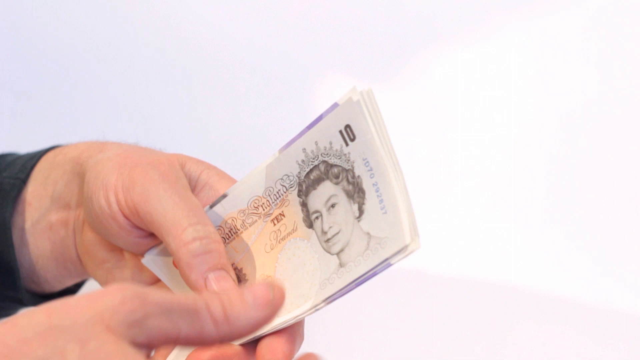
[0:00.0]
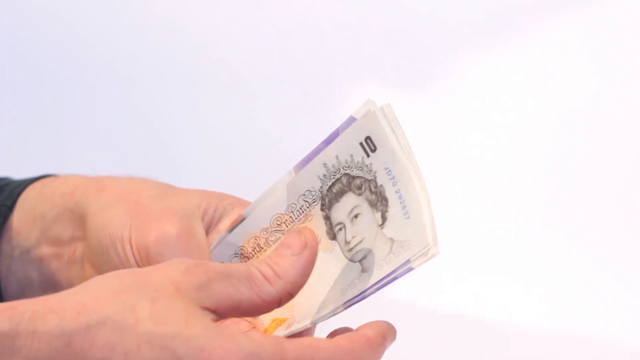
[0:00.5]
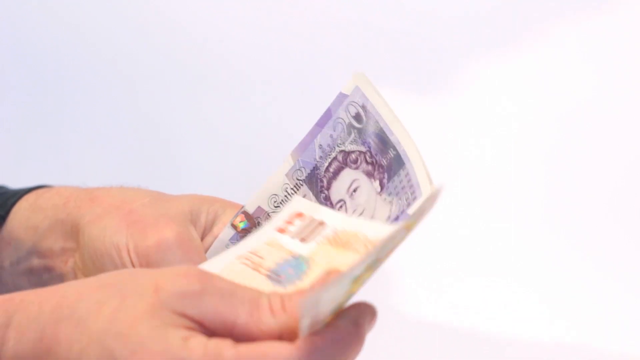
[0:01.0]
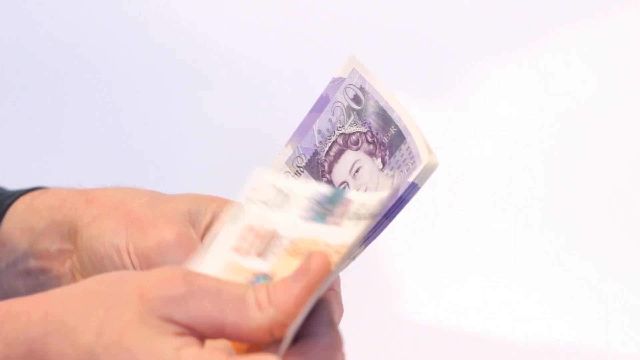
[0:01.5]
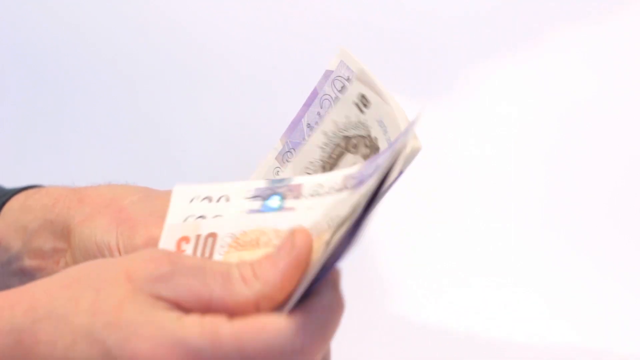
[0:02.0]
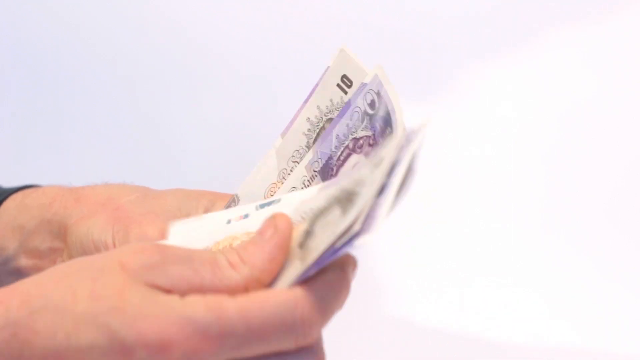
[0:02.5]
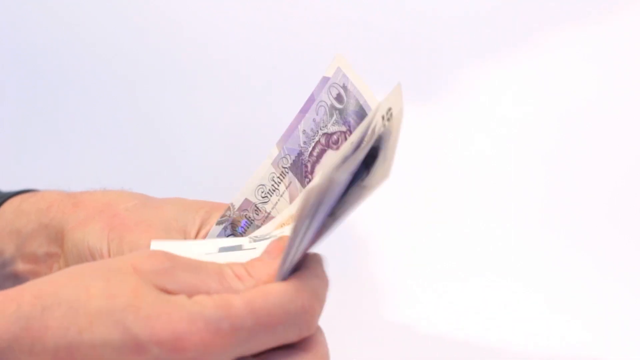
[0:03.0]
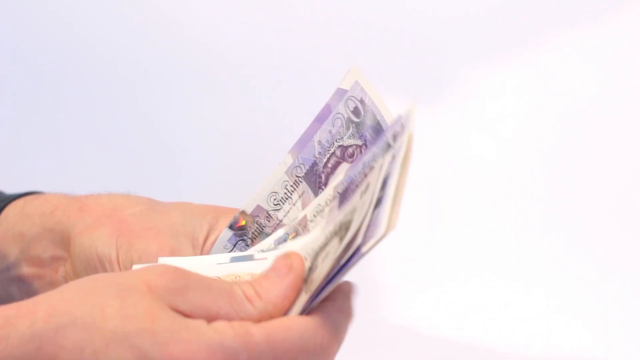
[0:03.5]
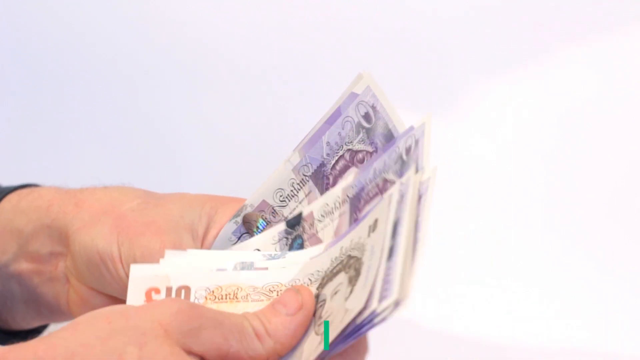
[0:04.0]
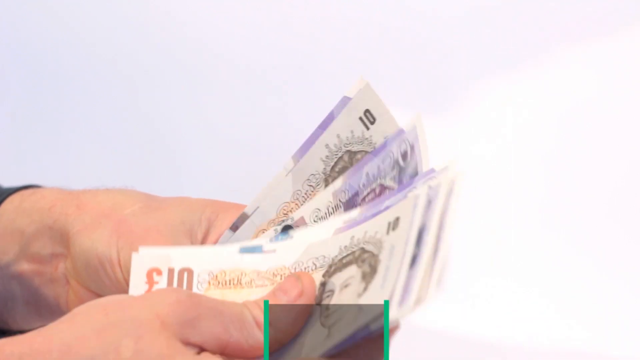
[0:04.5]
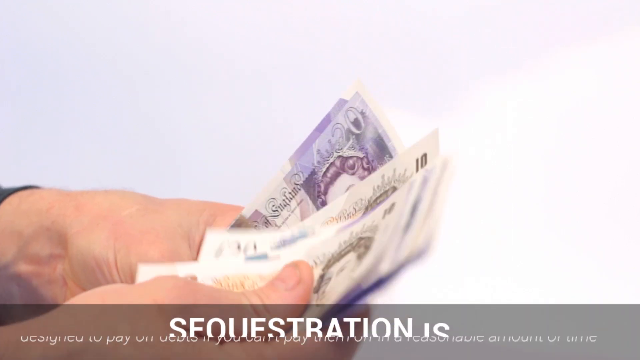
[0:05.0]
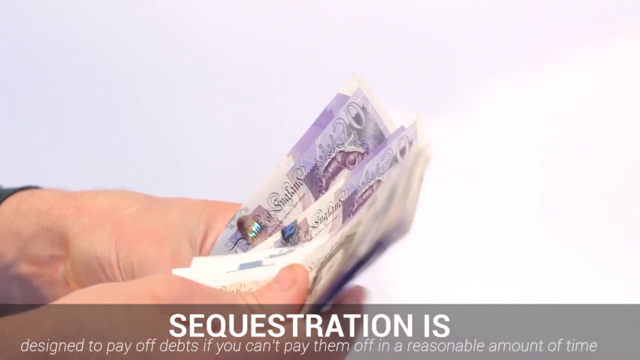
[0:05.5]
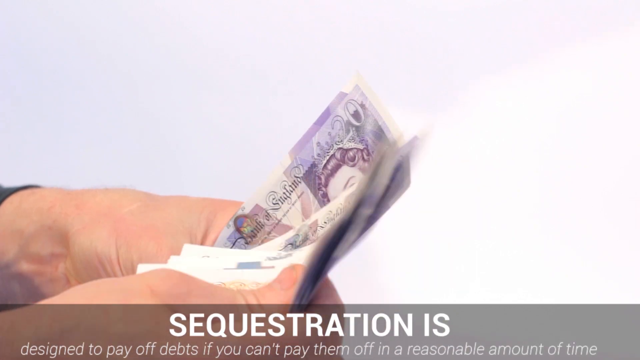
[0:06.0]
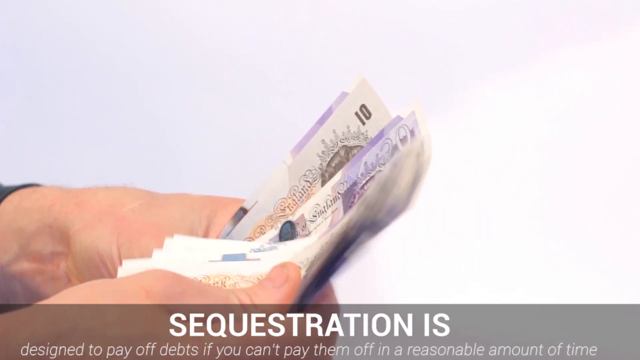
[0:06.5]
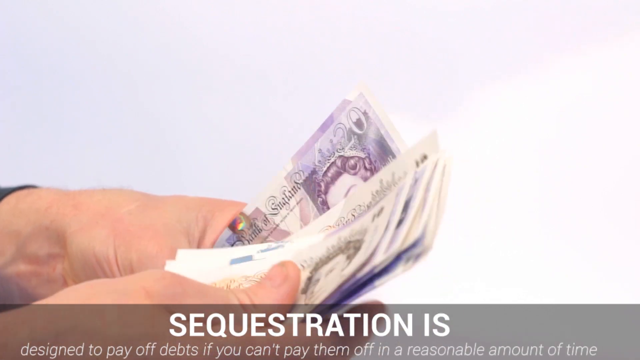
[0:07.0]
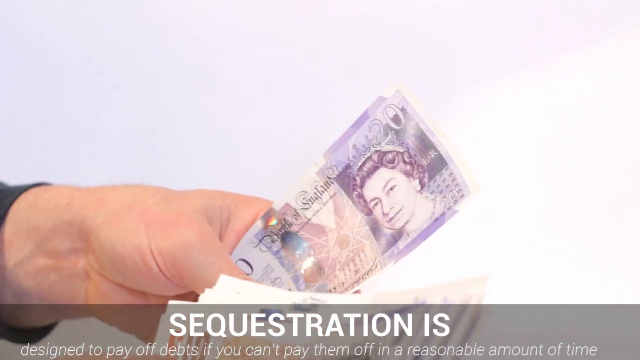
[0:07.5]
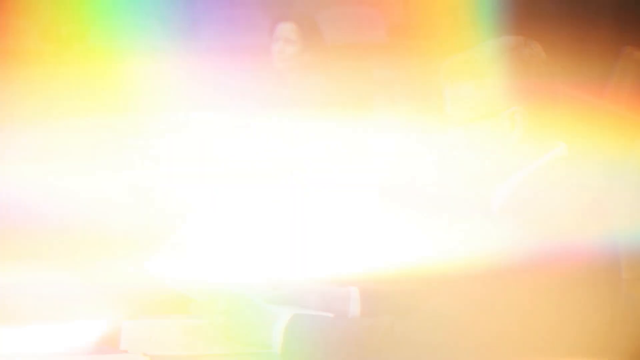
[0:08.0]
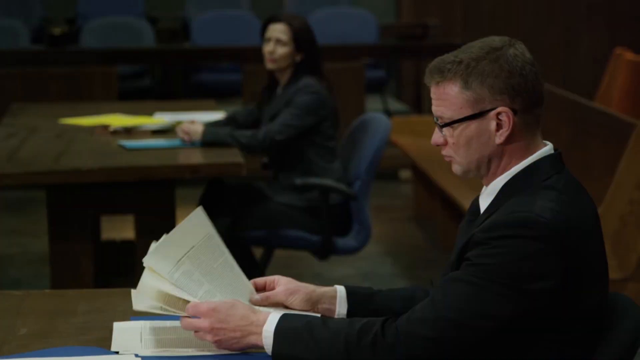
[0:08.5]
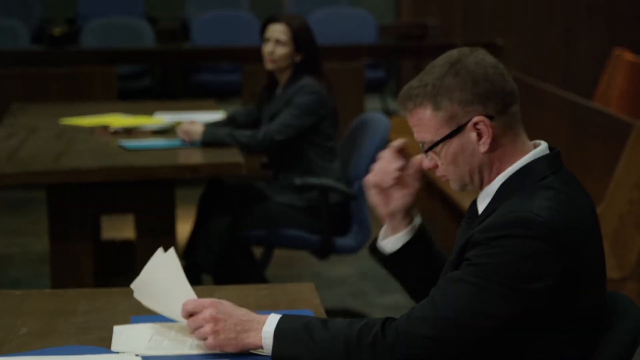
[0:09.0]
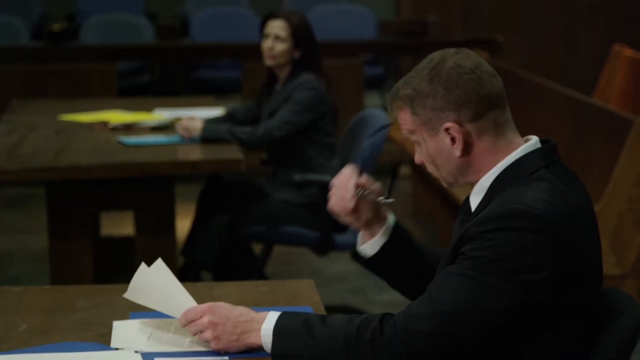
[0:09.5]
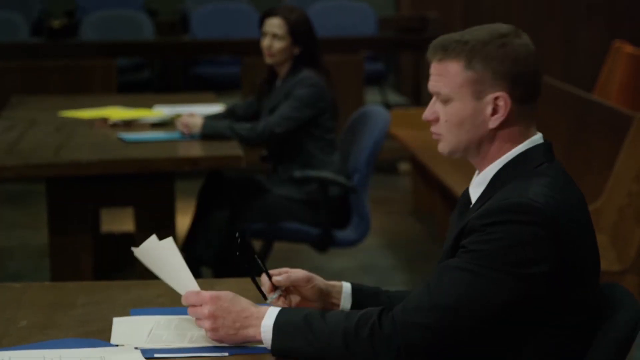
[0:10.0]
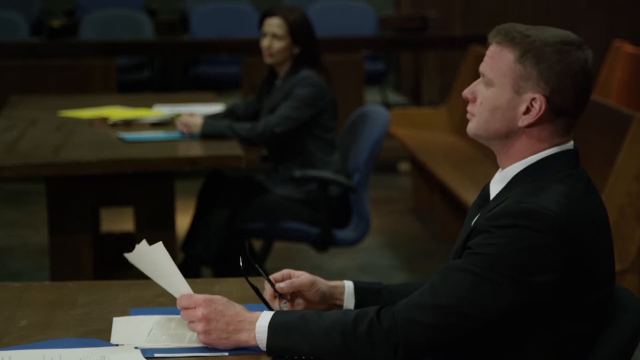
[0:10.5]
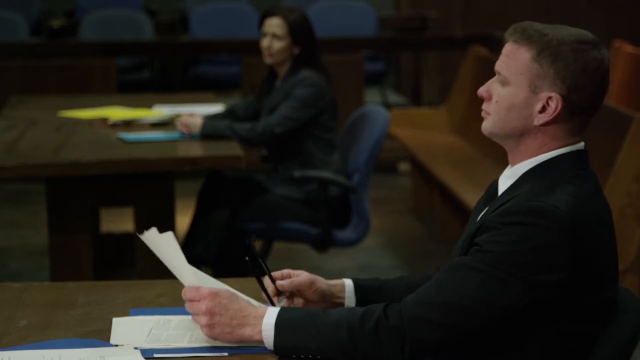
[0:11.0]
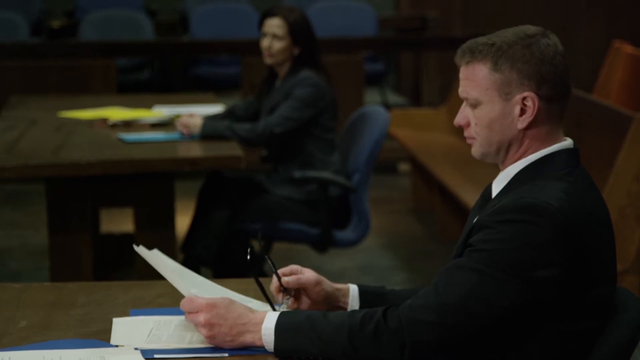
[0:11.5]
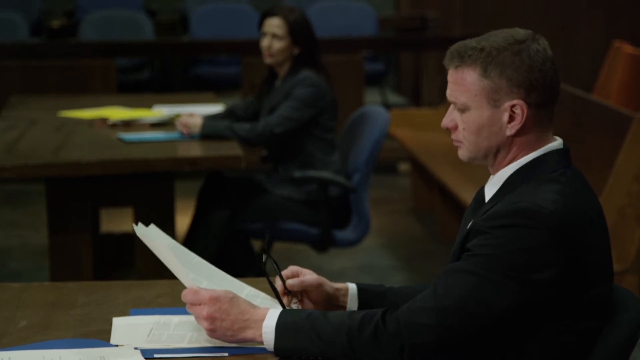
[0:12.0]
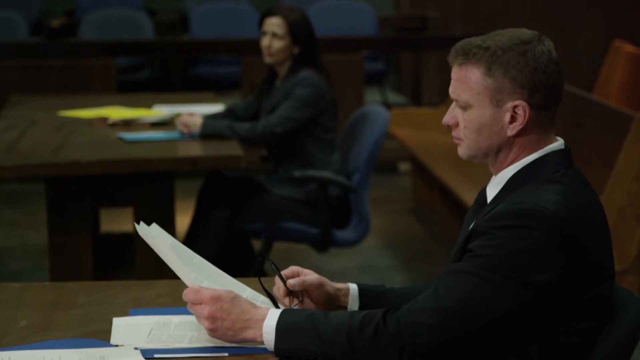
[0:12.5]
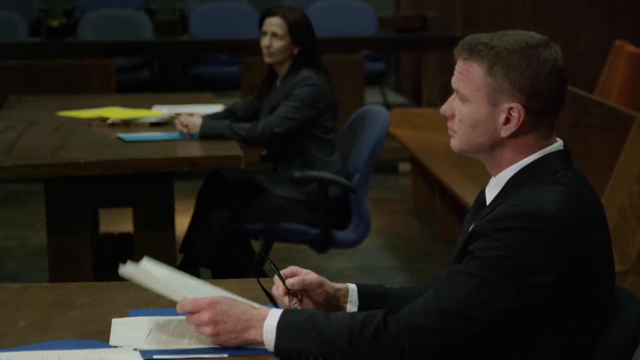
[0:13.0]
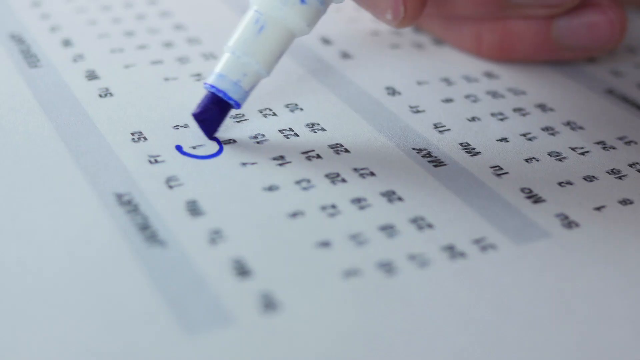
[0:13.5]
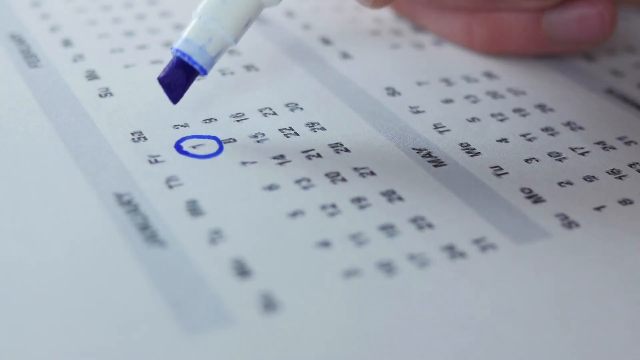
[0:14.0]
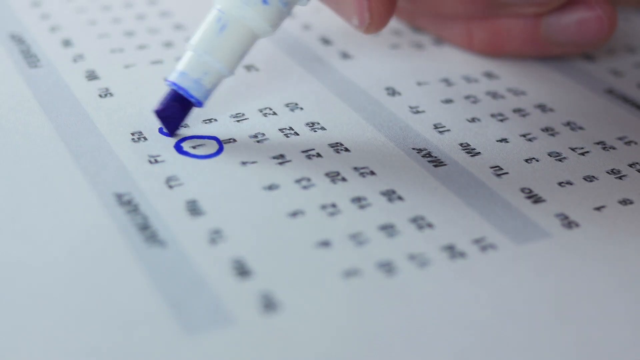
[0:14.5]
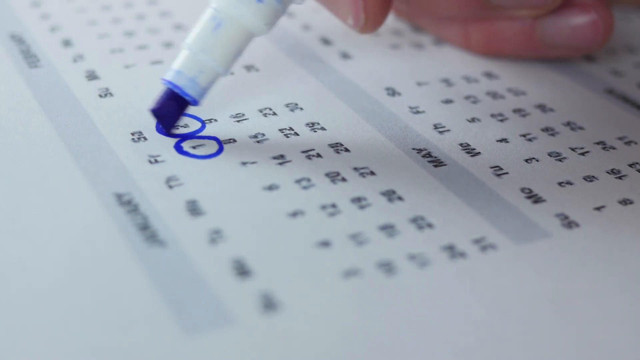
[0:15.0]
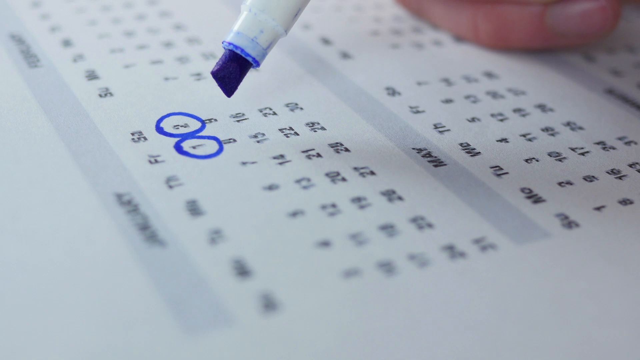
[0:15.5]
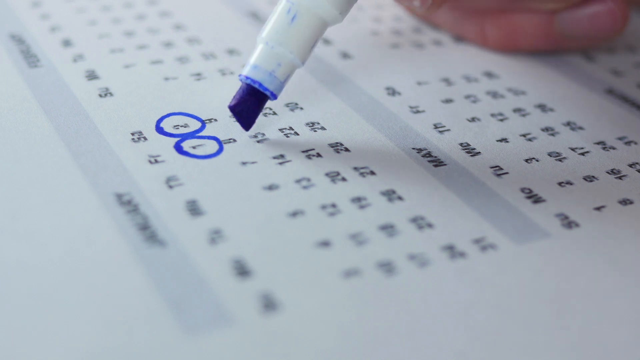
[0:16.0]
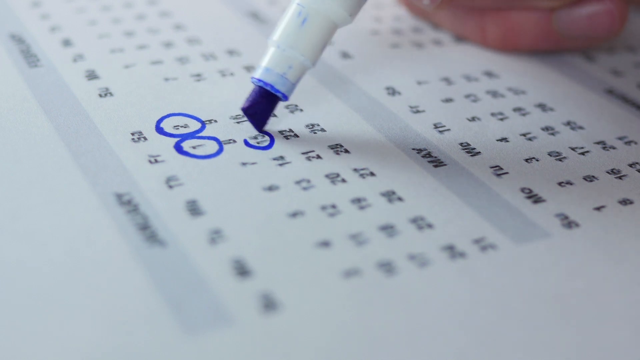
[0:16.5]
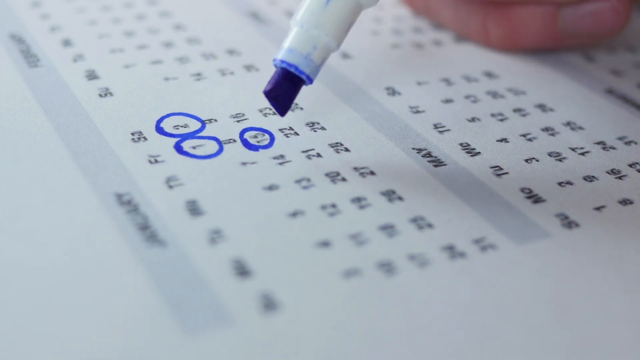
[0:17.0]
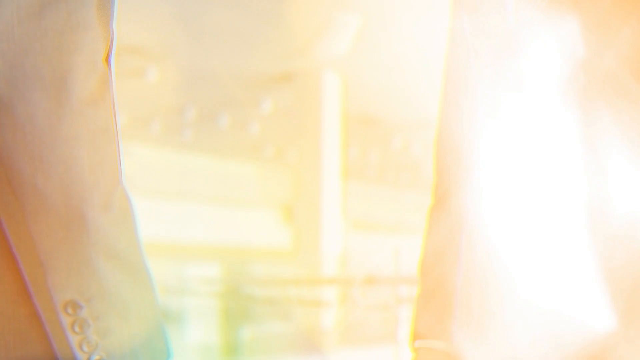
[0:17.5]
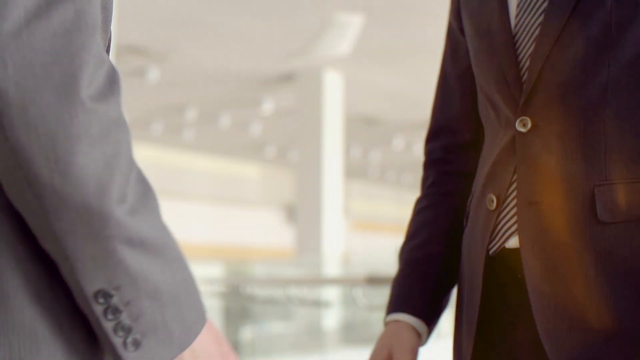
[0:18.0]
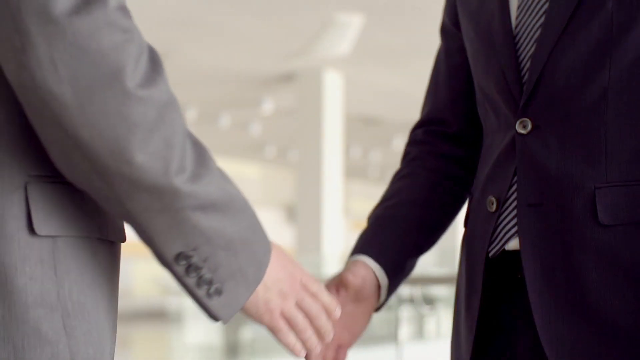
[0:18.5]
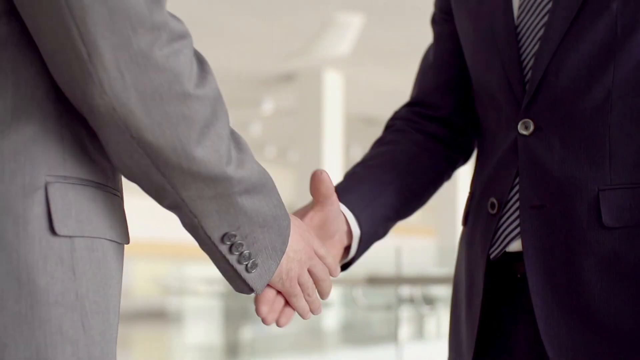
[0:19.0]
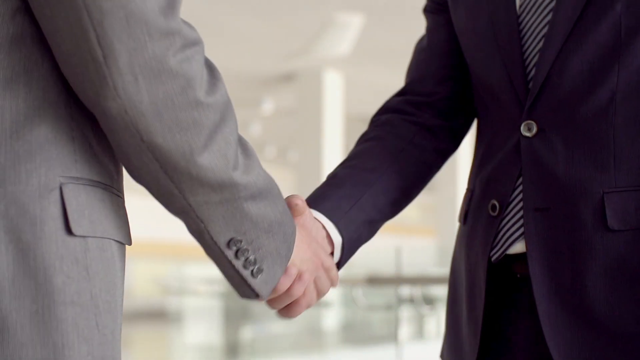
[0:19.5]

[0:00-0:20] A man counts money that appears to be British pounds, since Queen Elizabeth is on the notes. The footage that follows seems to be stock videos and images, apparently about four shots in total, and they look to show people working, possibly stressed, in professional environments.